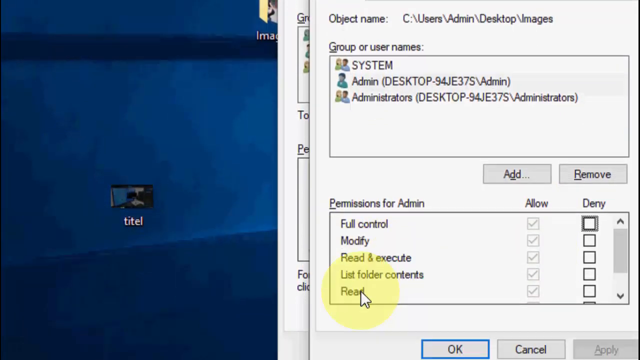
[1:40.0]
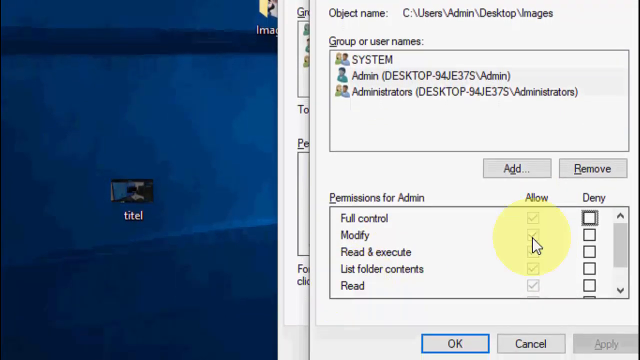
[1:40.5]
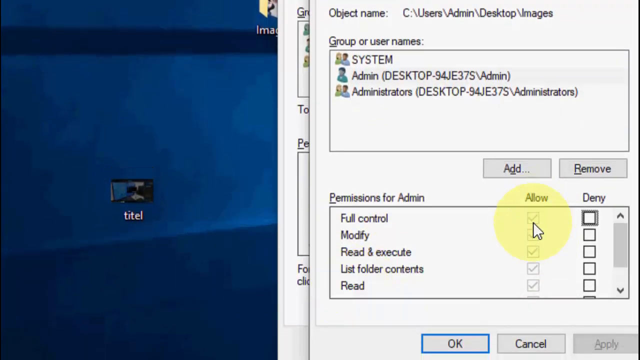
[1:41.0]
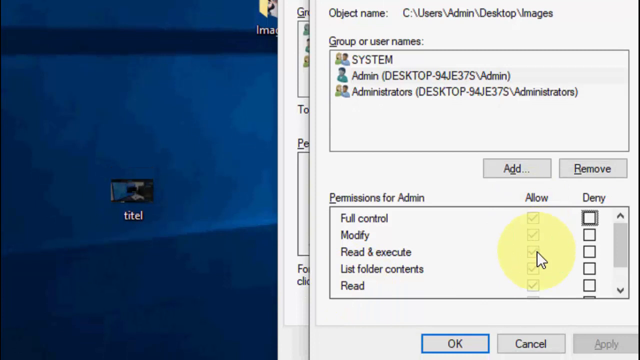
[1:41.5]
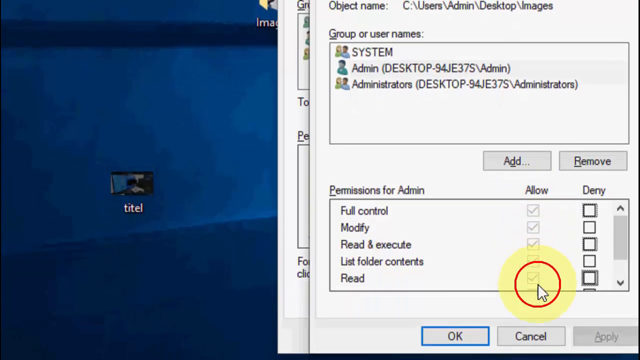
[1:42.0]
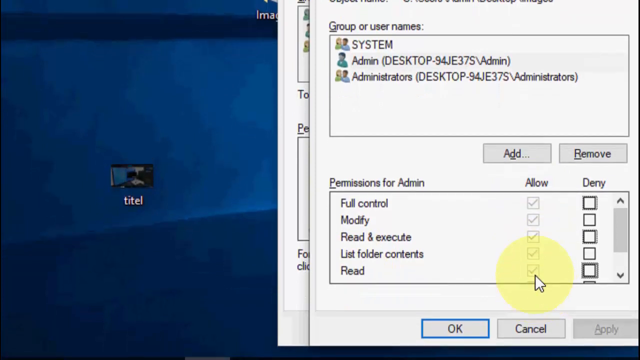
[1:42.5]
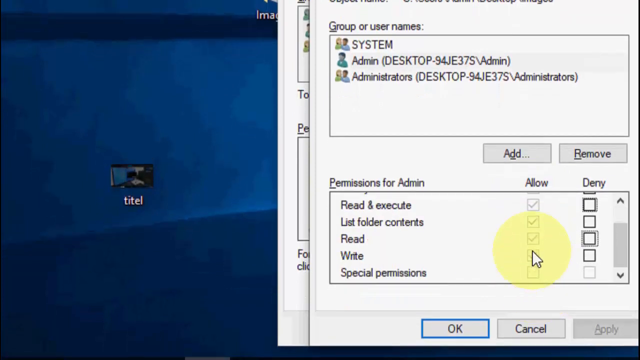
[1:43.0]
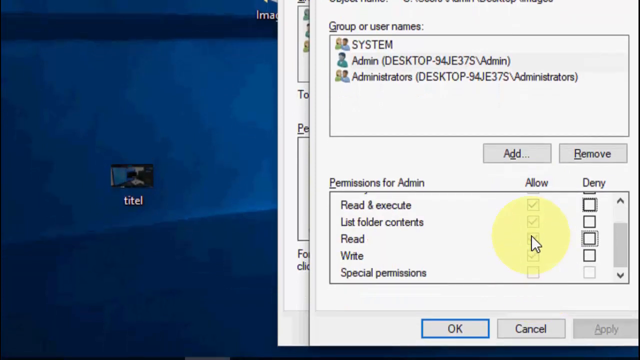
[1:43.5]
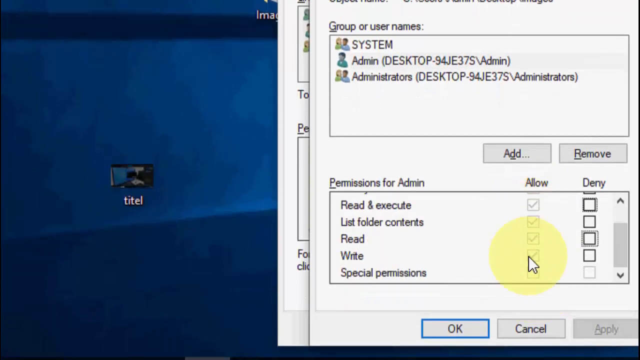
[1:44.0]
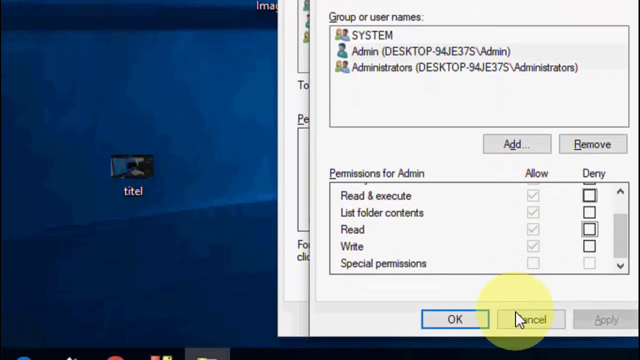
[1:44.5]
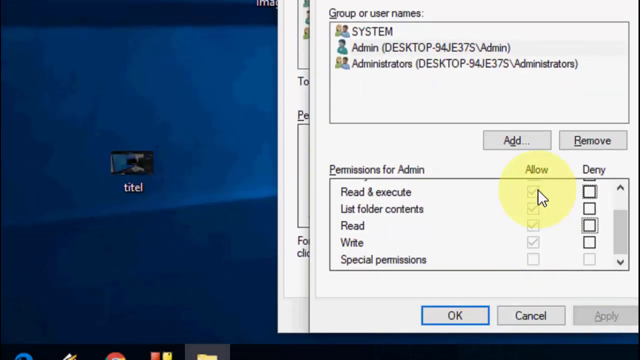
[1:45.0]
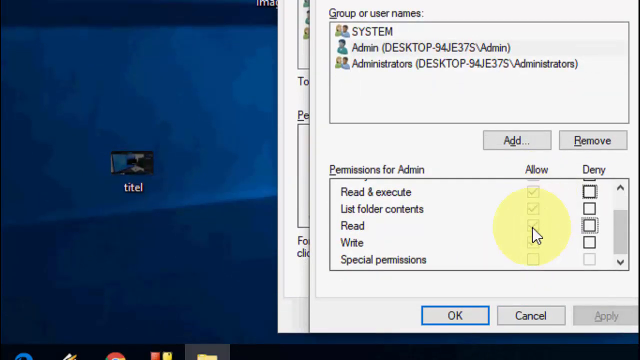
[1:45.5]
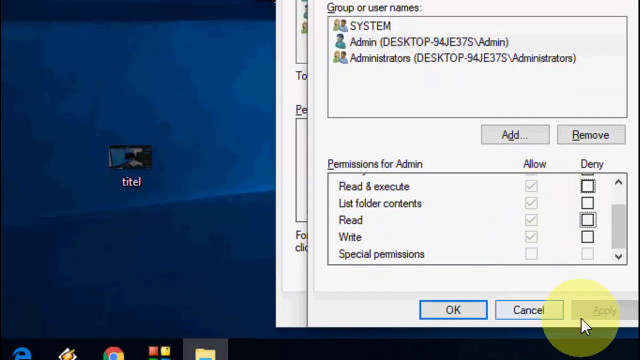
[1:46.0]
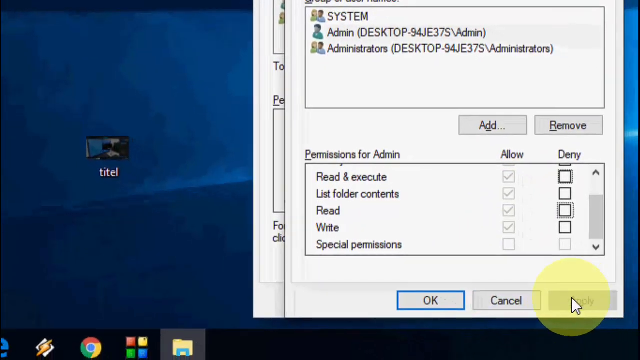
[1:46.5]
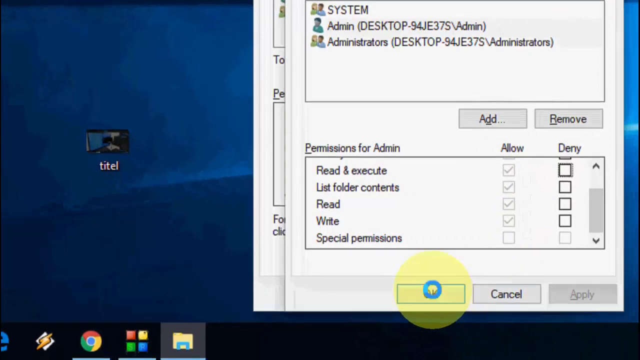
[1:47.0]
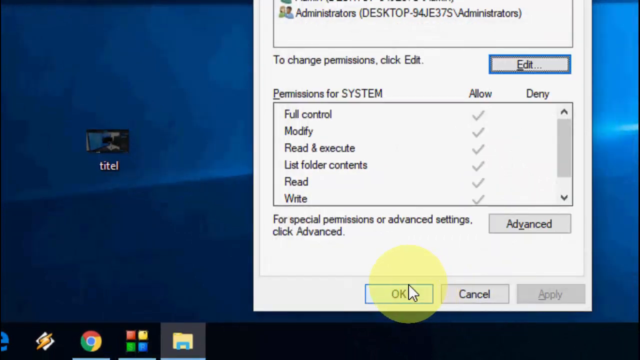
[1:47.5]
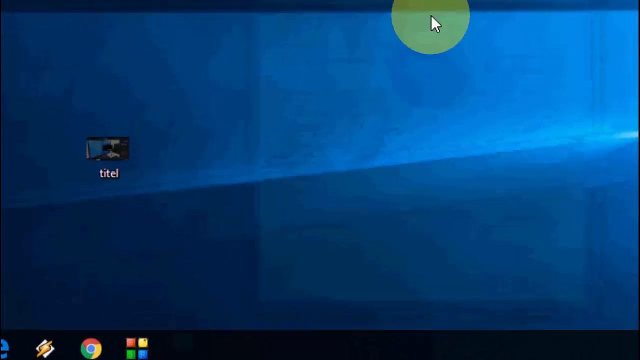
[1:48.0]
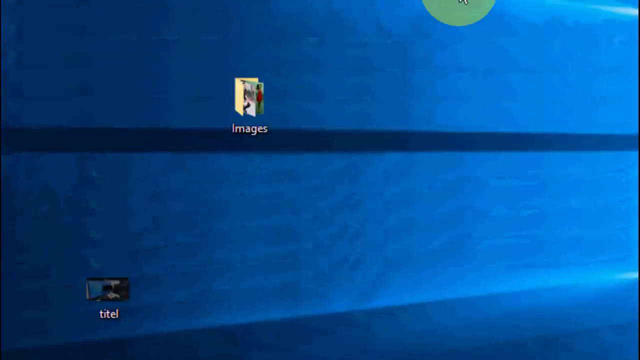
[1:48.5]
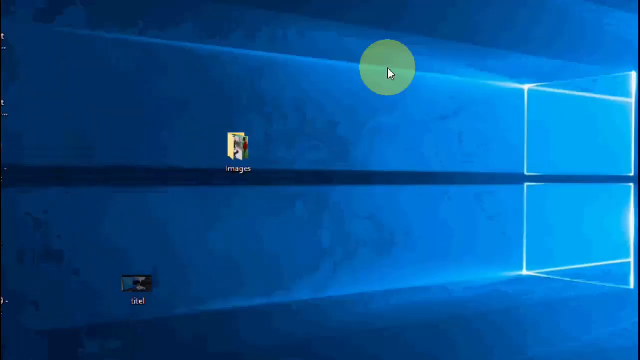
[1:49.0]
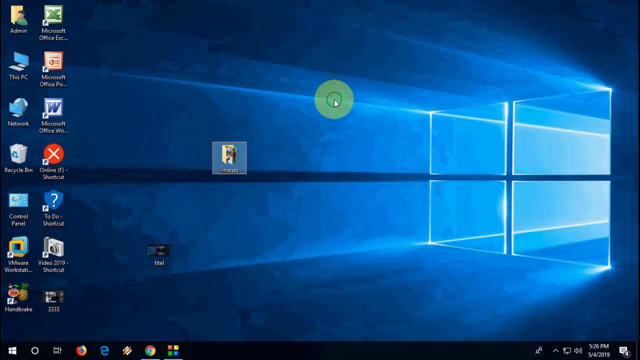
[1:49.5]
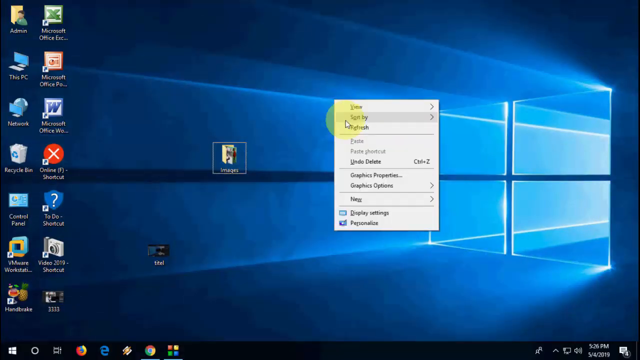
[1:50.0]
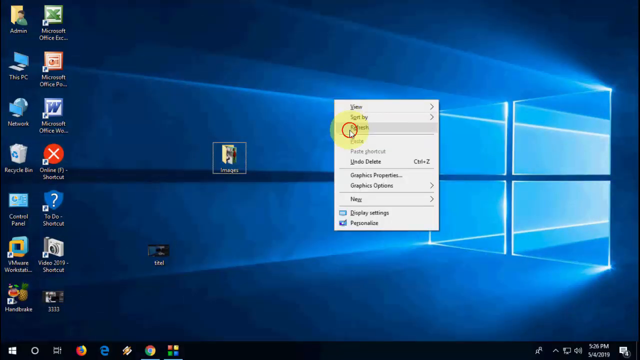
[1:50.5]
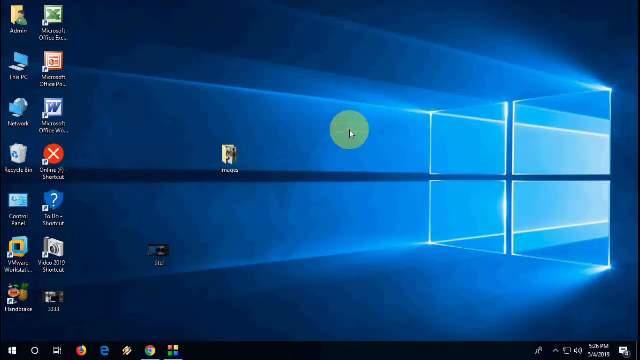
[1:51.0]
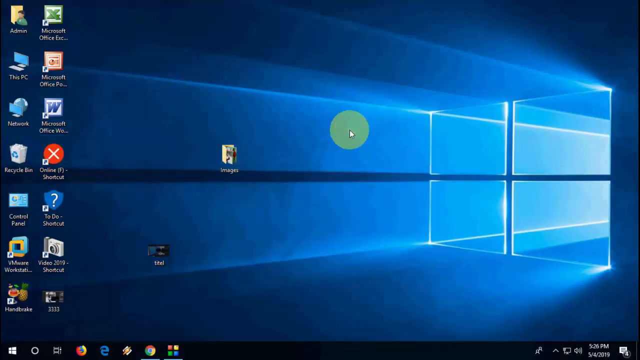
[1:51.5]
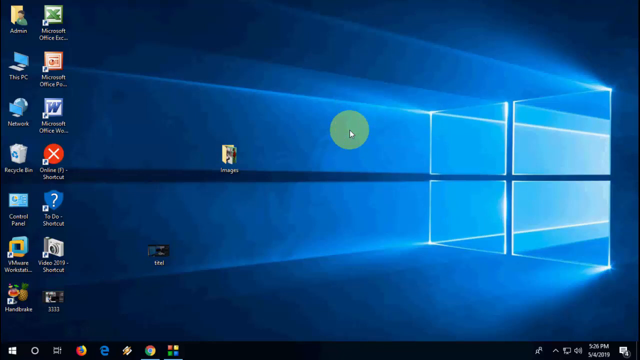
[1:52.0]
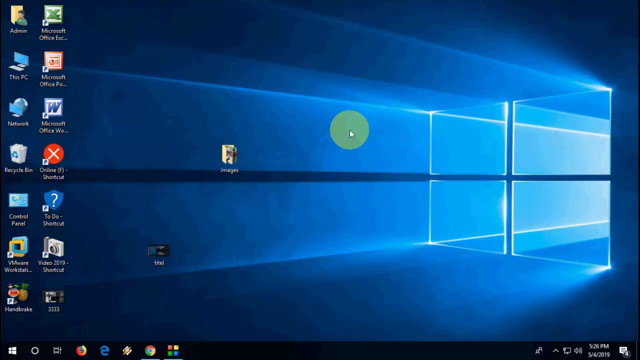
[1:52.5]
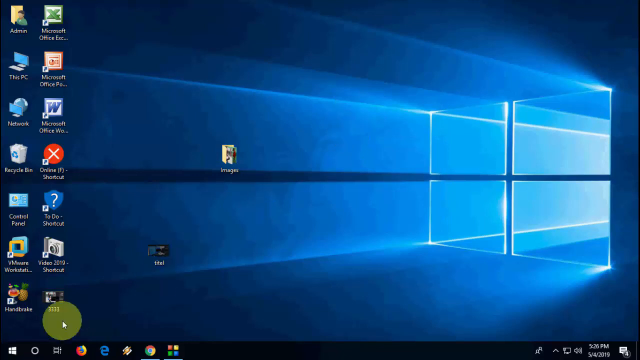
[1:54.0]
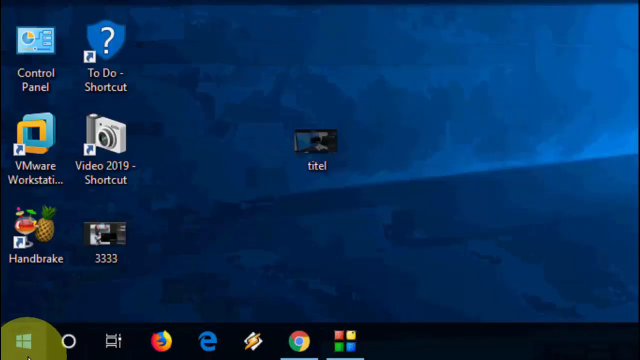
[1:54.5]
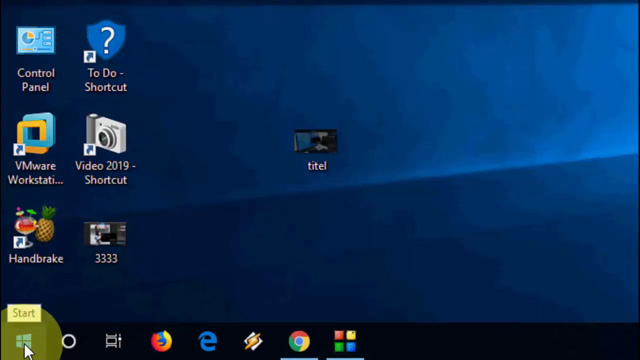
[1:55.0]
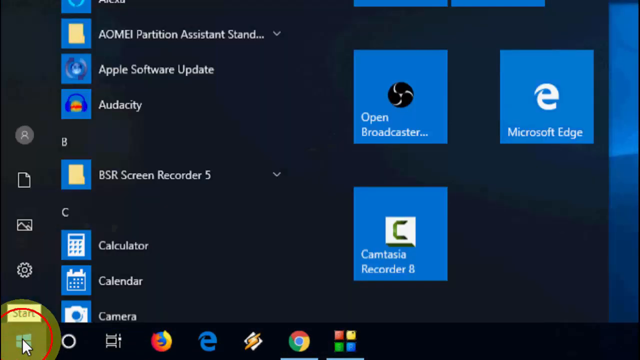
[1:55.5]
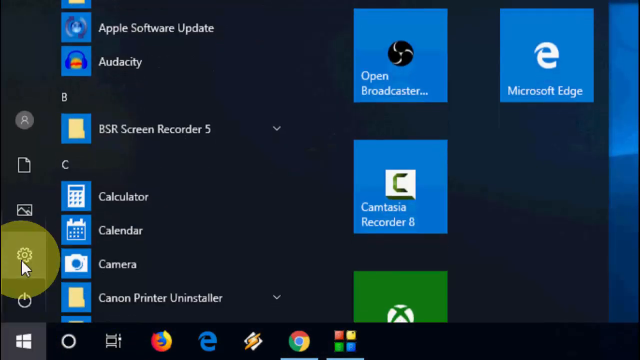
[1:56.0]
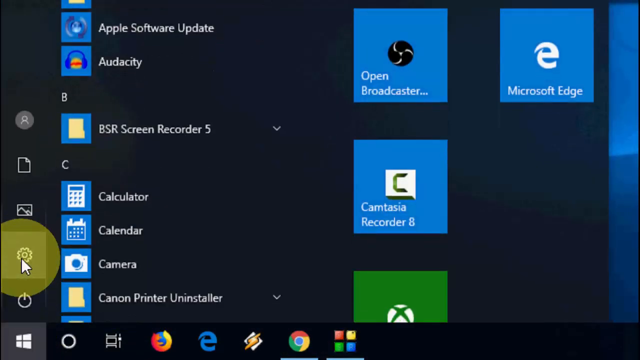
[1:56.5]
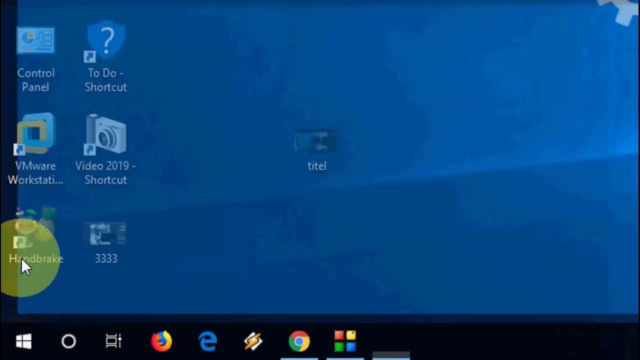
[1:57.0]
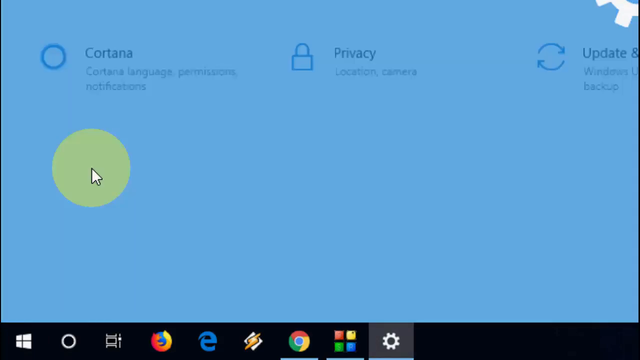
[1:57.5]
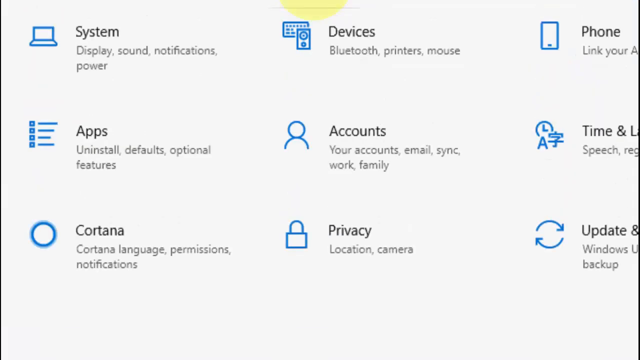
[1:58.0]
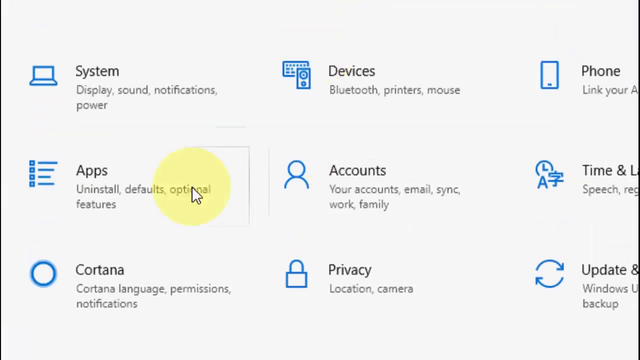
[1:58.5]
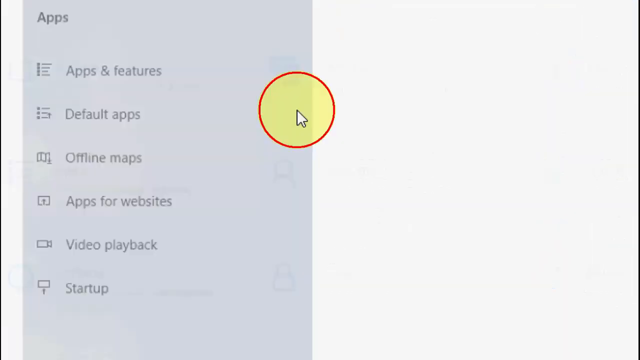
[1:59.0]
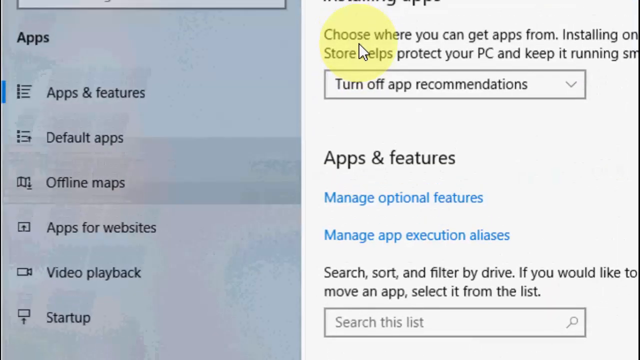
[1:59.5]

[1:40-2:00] Scrolling down under the admin permissions, the user hovers over the allow section and clicks everything in it, but nothing gets selected because the allow section is greyed out; only the deny section is accessible. The user clicks OK on both windows and returns to the desktop, right-clicks it and presses refresh. The user then moves to the bottom left and clicks the start button. The start menu shows many applications, such as BSR Screen Recorder 5, Apple Software Update and Audacity, along with system applications like Calculator, Calendar, Camera and Microsoft Edge. The user clicks the settings button on the left side, and among the many settings categories, clicks apps.